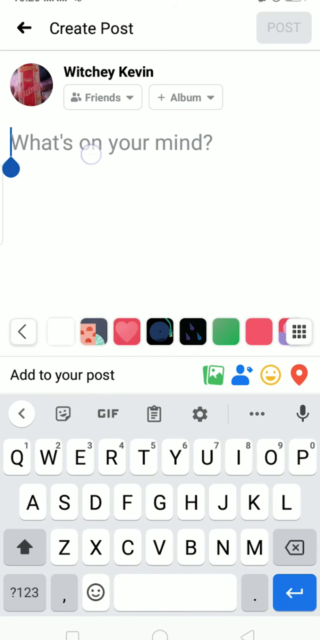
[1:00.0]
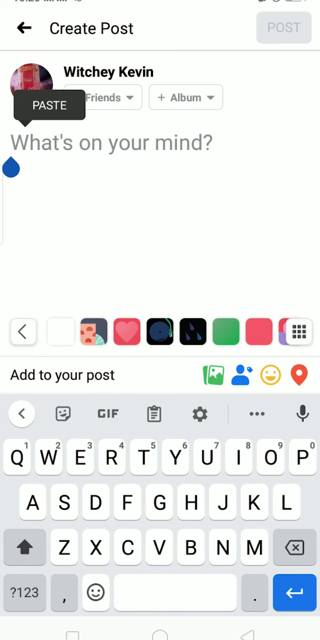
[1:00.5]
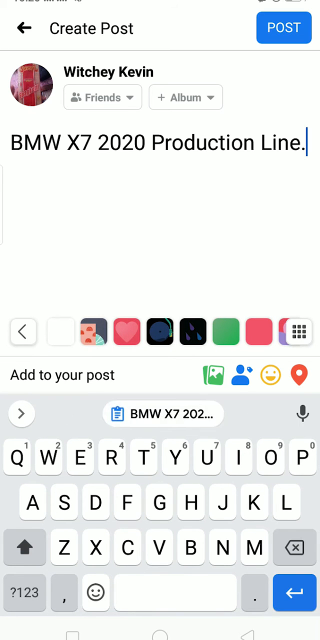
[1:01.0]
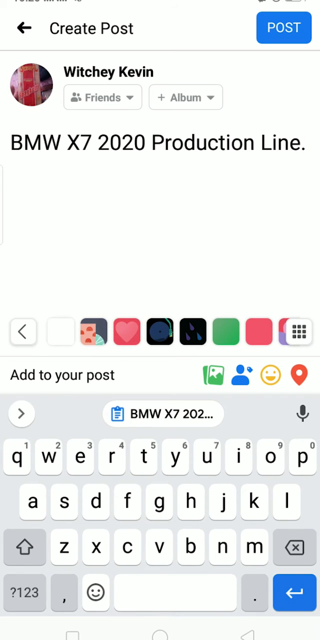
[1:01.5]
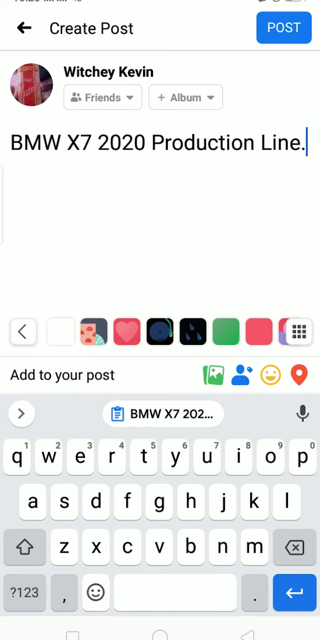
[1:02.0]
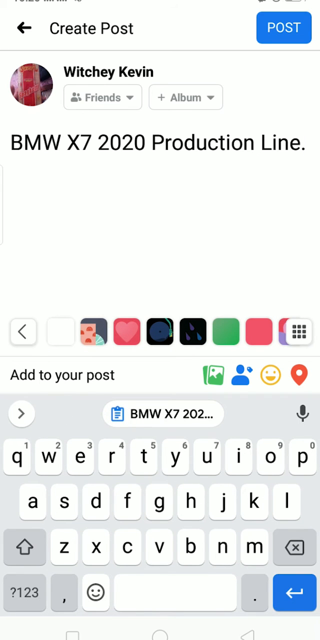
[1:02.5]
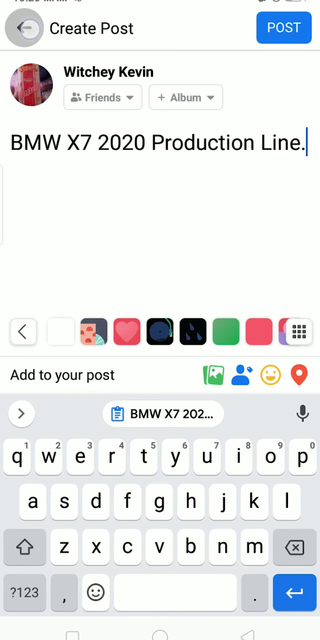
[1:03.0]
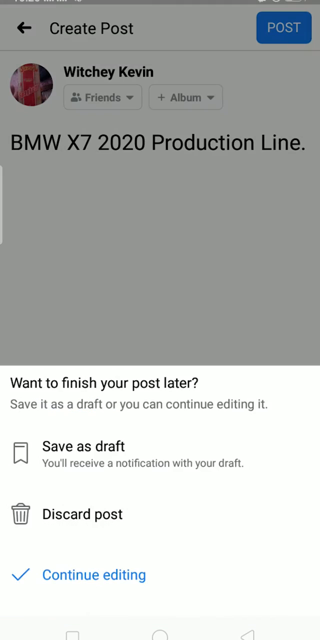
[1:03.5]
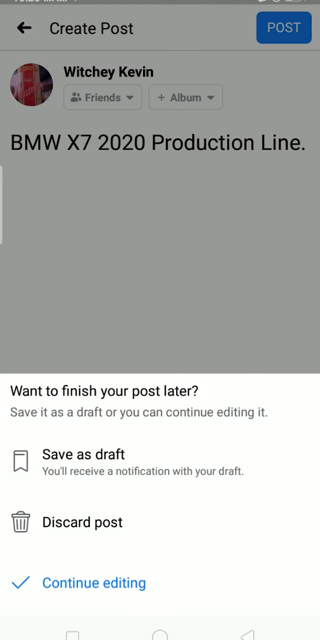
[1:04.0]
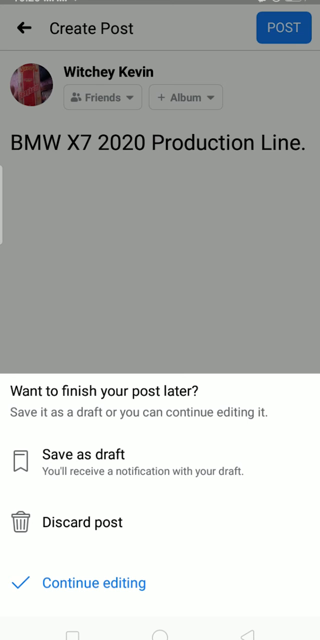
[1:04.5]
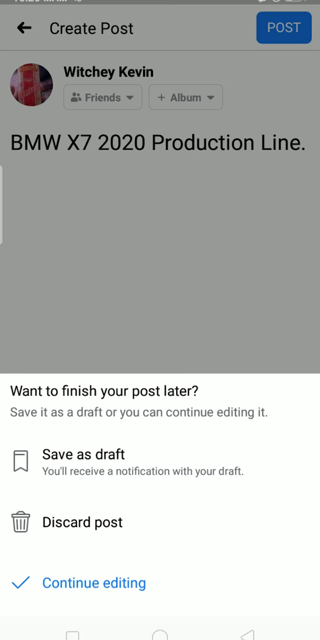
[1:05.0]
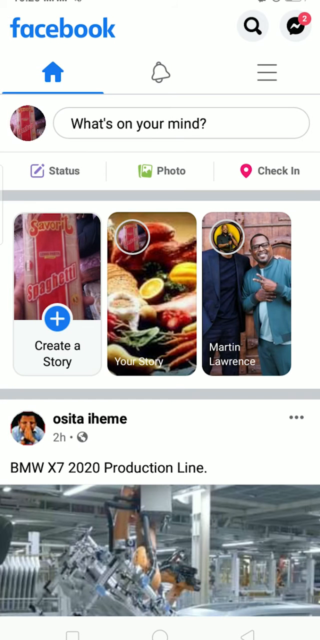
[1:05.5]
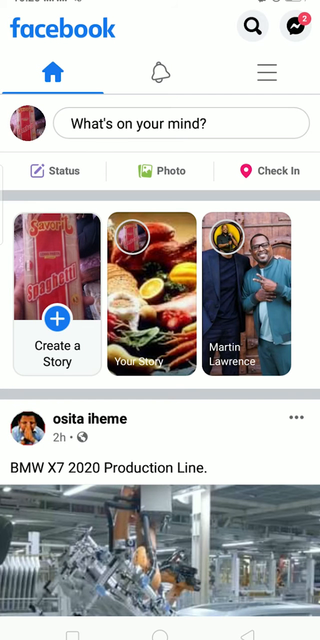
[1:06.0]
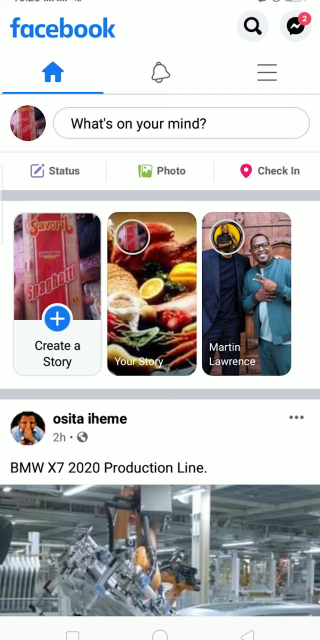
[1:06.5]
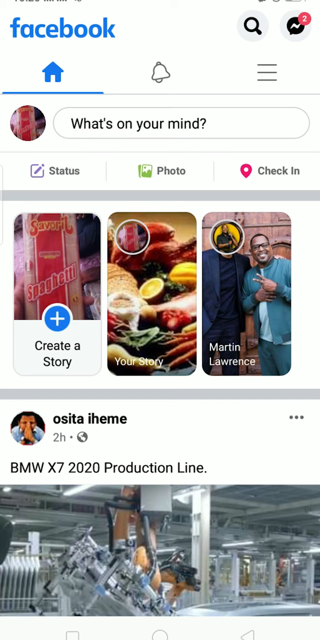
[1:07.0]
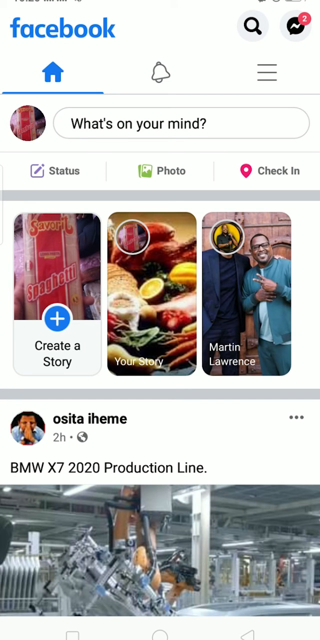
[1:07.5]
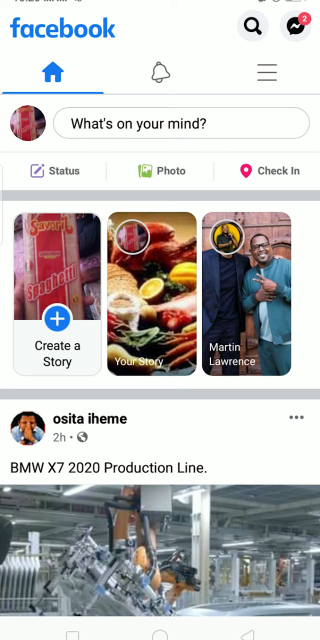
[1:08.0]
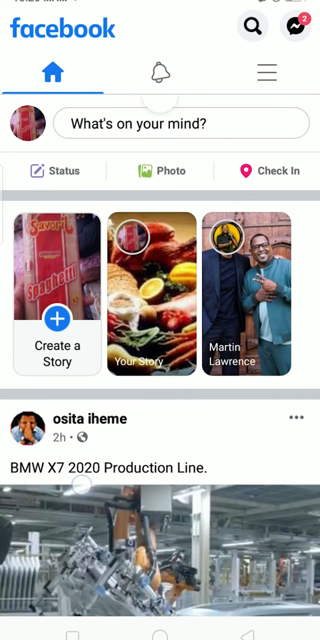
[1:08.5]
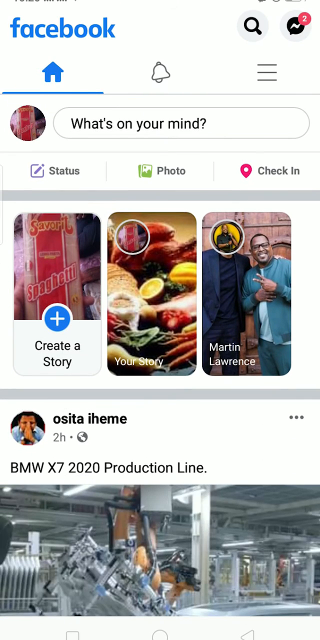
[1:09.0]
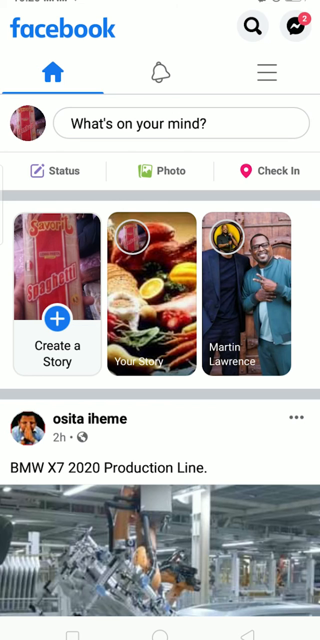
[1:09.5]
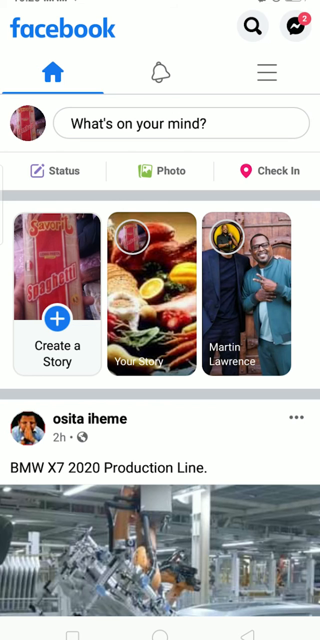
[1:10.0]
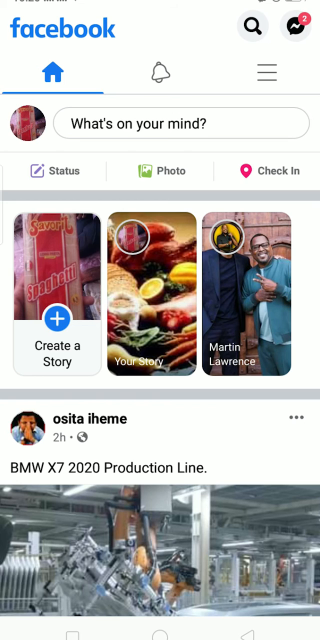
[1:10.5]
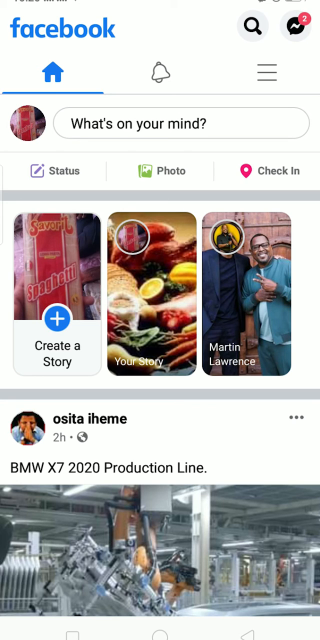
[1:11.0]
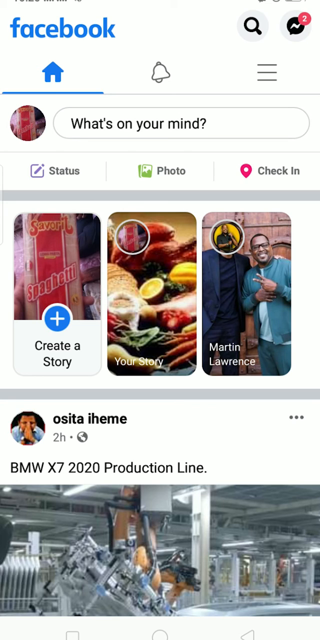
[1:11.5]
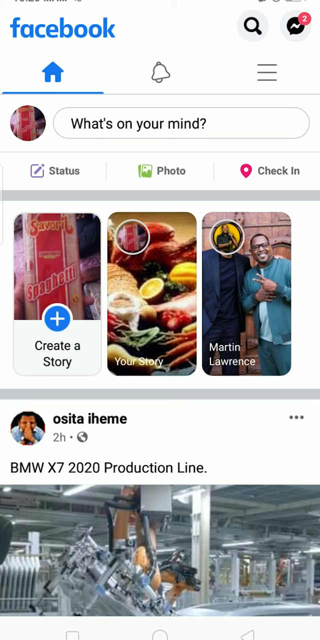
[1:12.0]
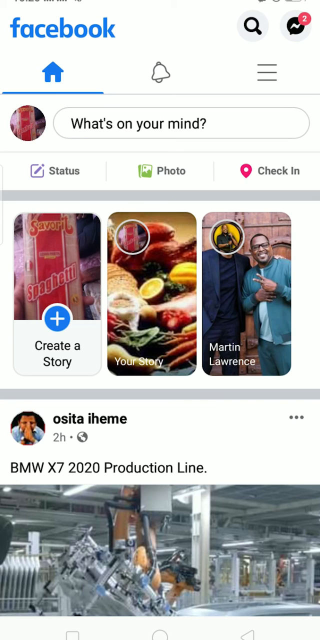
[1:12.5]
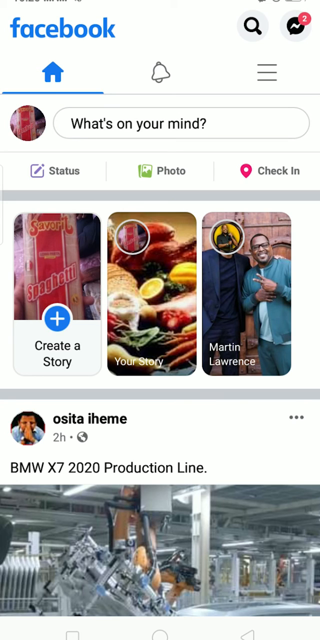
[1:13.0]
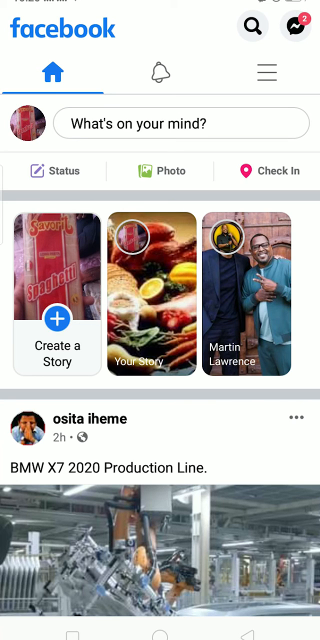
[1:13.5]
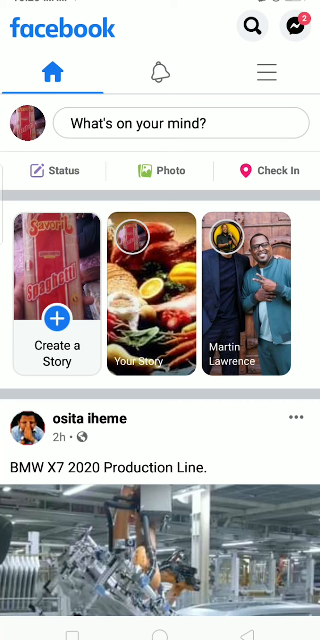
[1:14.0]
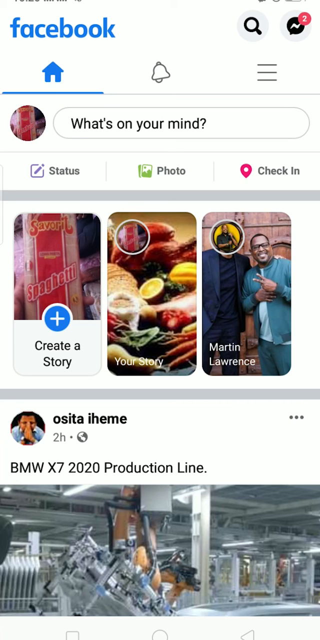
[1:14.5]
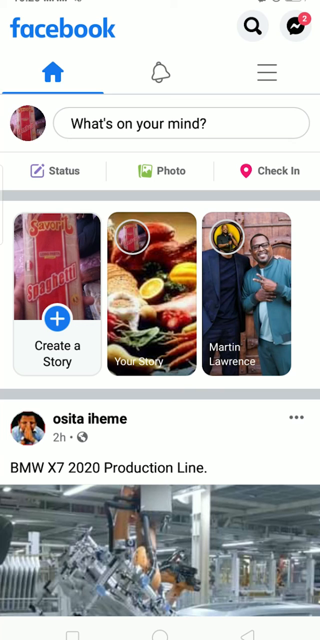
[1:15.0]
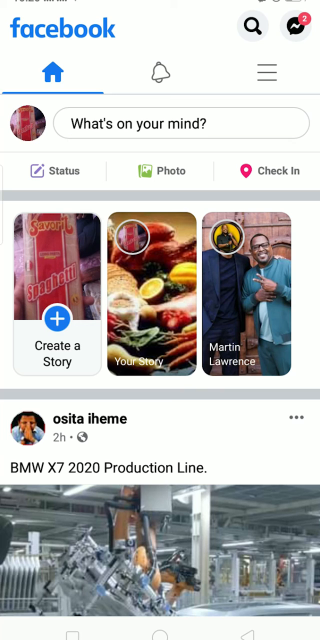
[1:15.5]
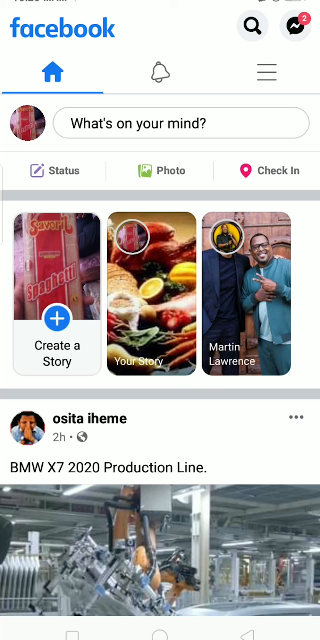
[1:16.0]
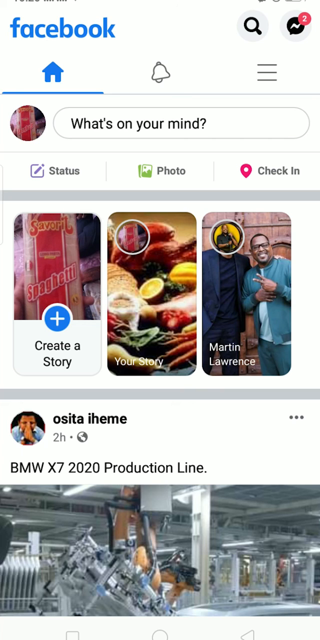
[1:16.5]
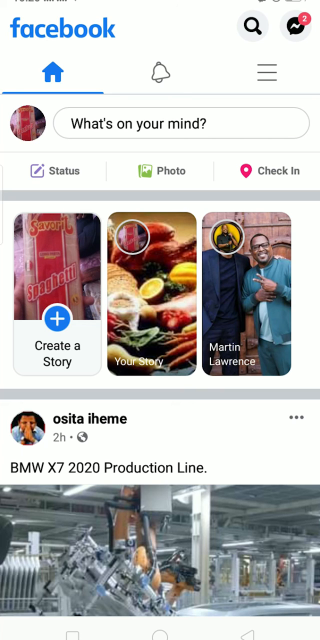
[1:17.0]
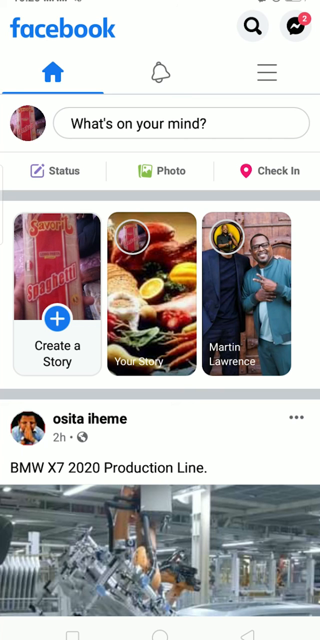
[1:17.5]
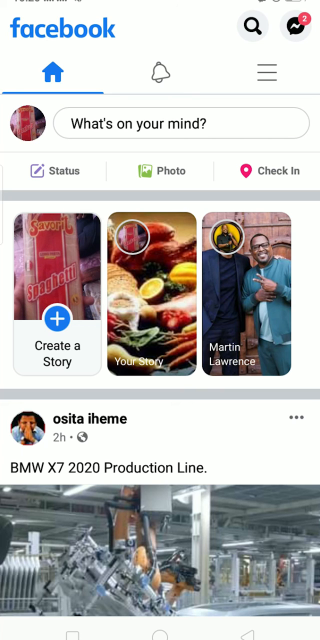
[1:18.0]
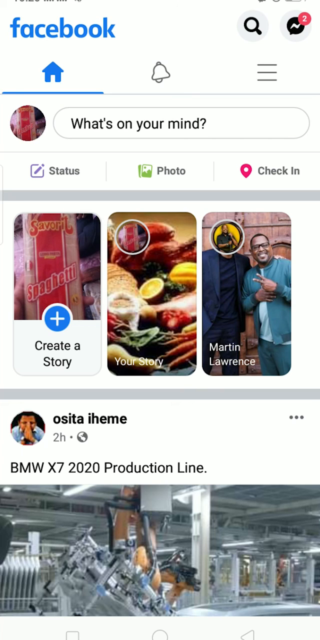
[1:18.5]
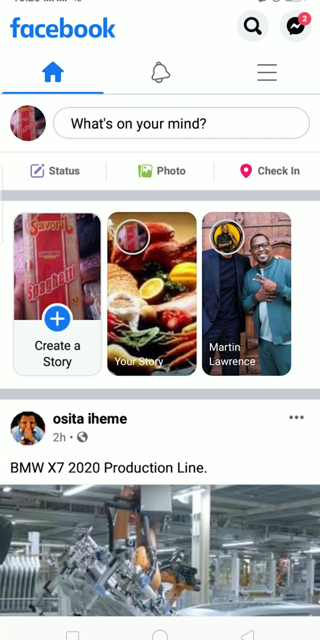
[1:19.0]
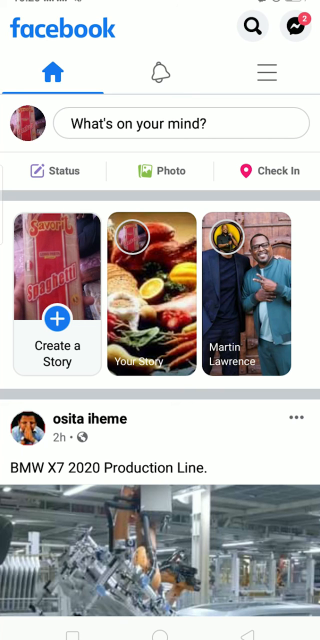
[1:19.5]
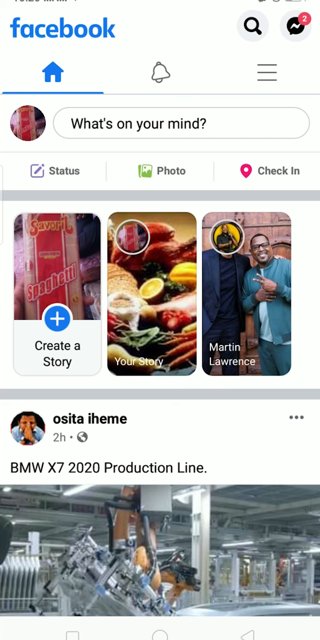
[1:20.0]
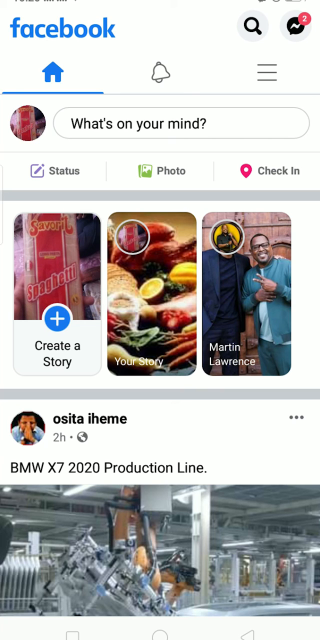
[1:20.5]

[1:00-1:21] The video starts on the "what's on your mind" area, and the person does the BMW production line paste again. They click all over the place, and the video scrolls up and down extremely quickly. After that, nothing happens and the screen stalls. Toward the end, the person acts as if they are going to post something but then doesn't, and the video sits paused with nothing else happening.